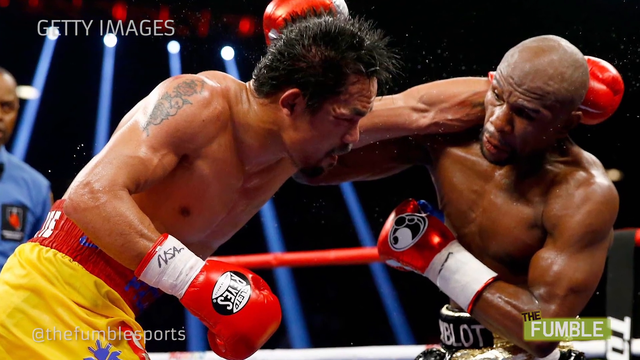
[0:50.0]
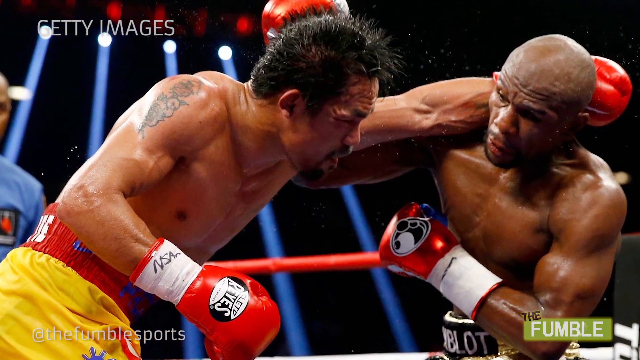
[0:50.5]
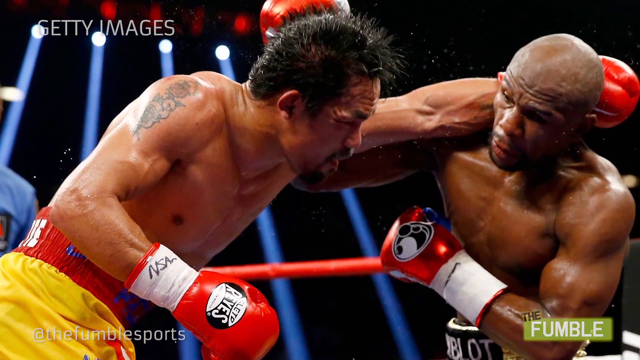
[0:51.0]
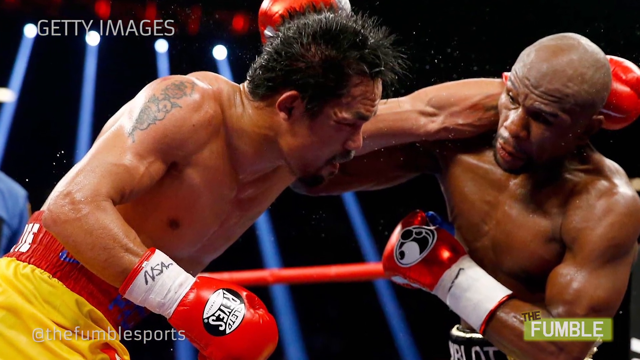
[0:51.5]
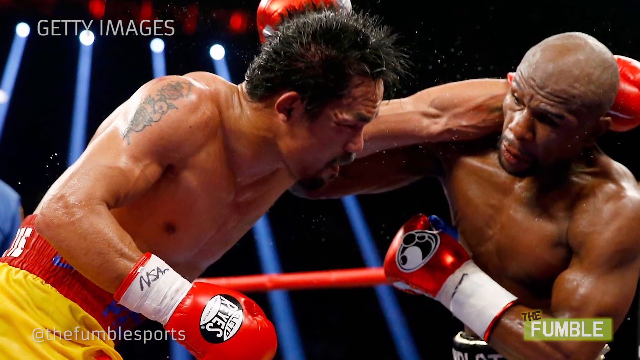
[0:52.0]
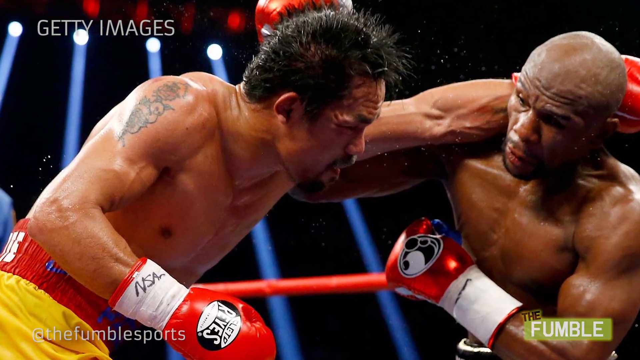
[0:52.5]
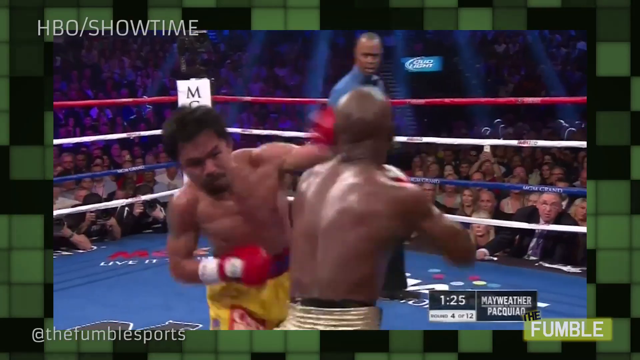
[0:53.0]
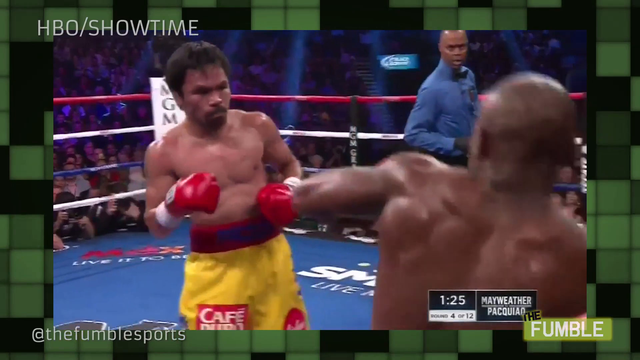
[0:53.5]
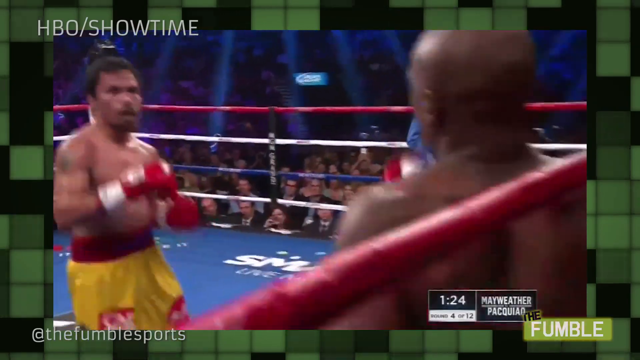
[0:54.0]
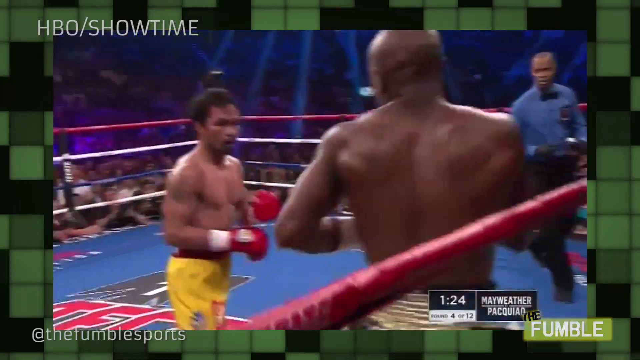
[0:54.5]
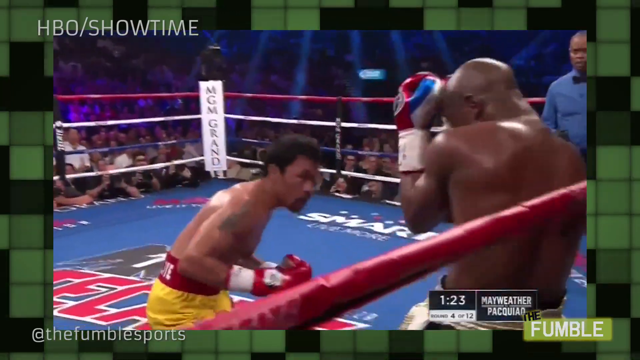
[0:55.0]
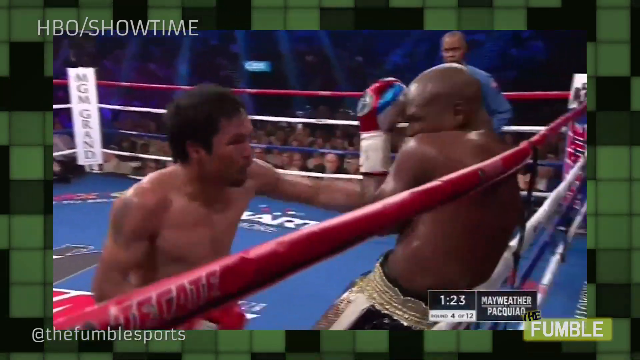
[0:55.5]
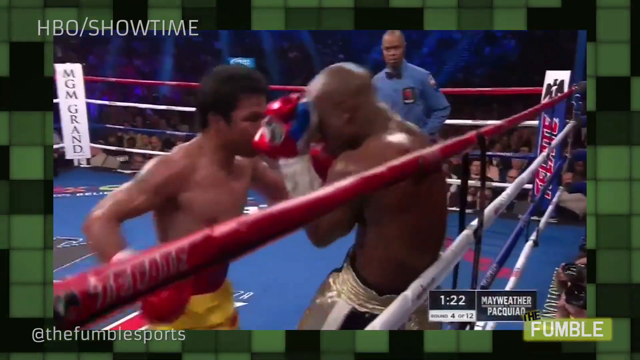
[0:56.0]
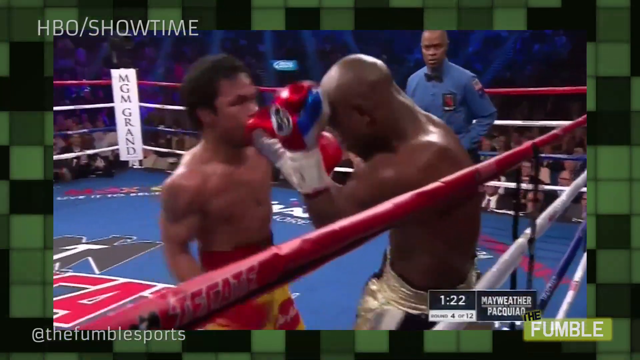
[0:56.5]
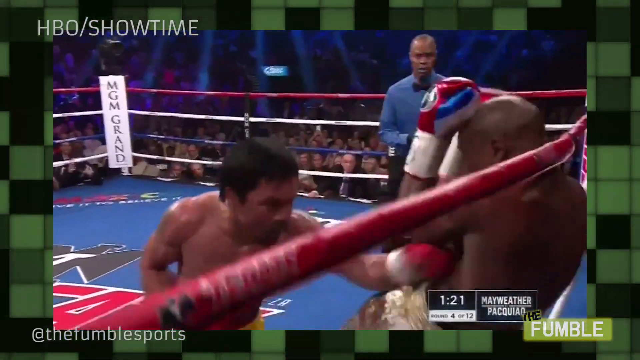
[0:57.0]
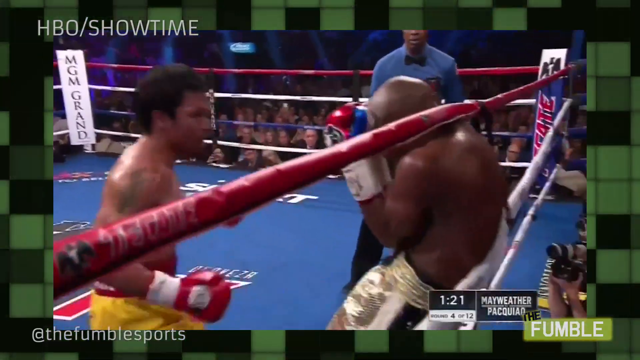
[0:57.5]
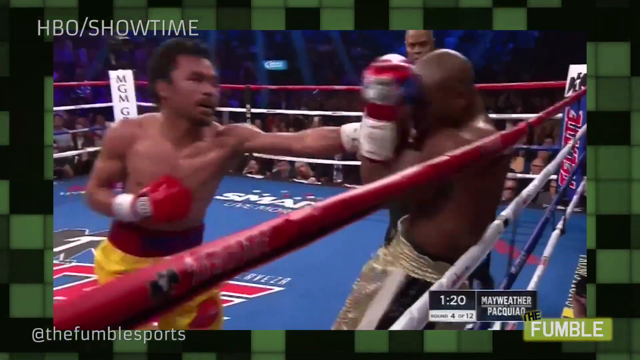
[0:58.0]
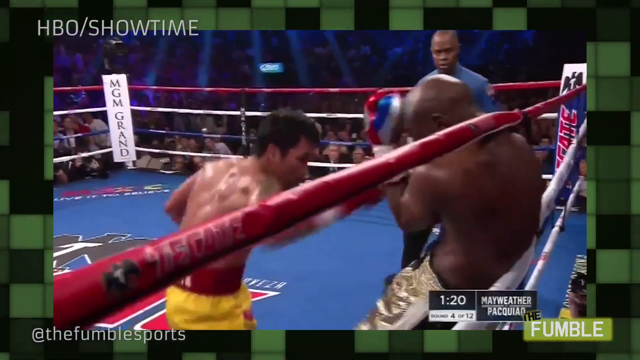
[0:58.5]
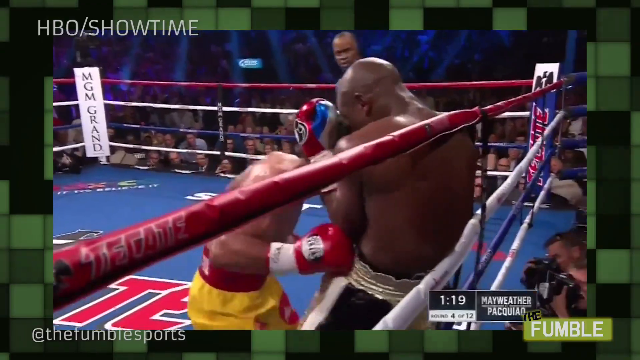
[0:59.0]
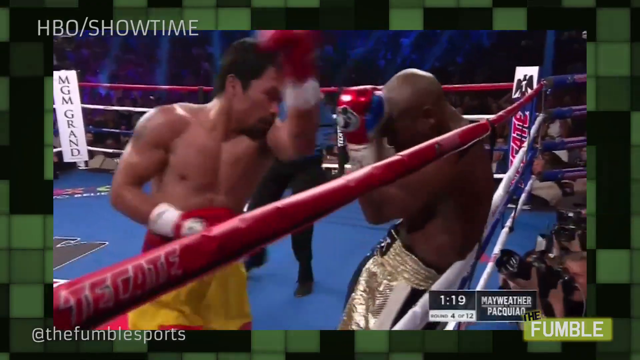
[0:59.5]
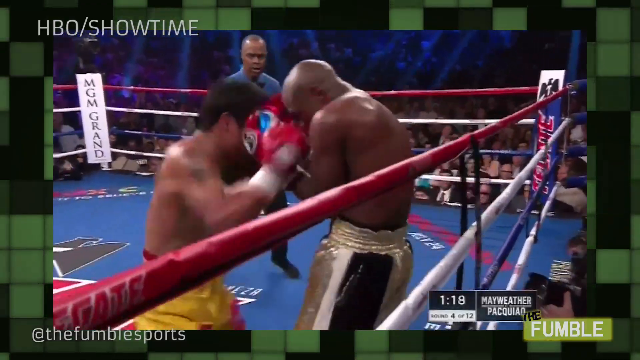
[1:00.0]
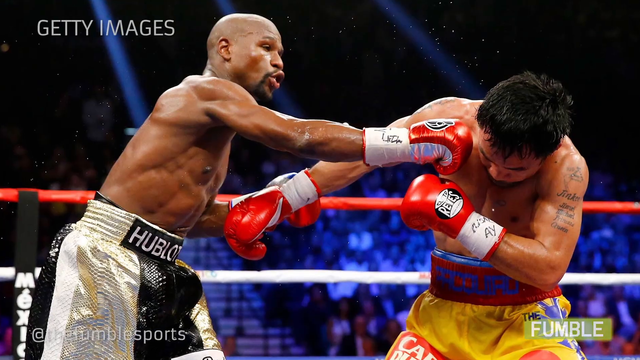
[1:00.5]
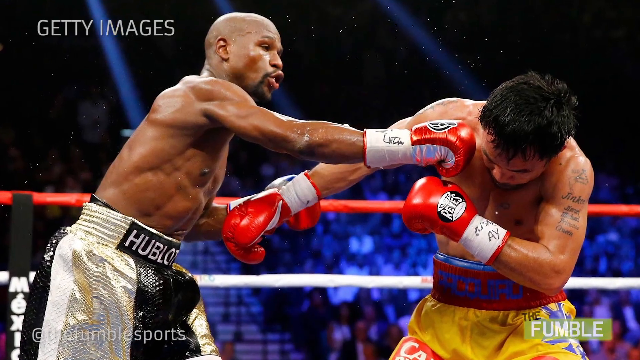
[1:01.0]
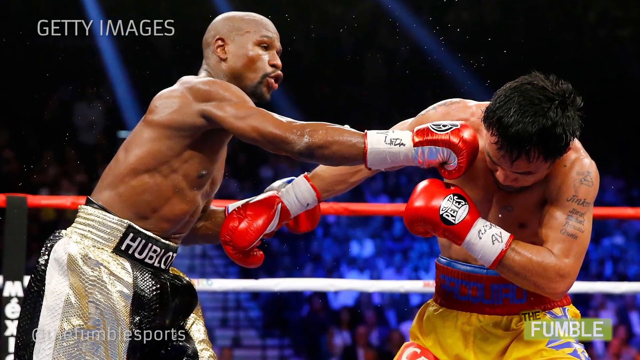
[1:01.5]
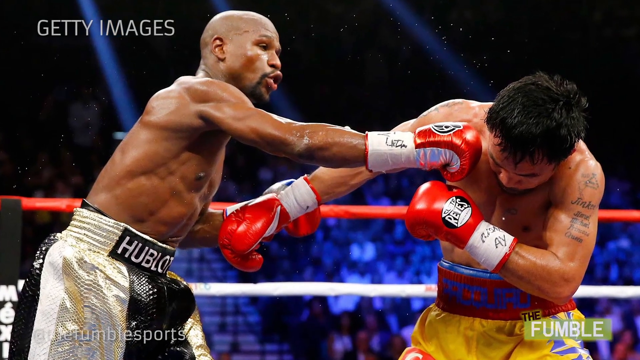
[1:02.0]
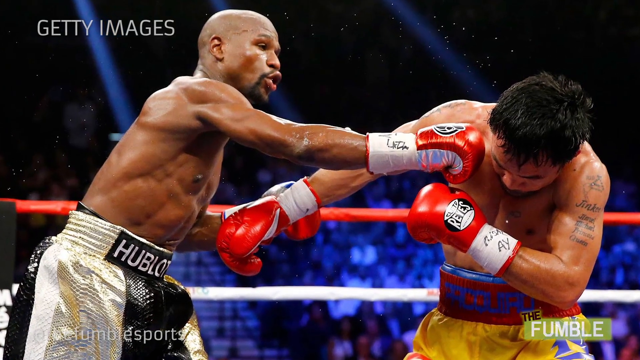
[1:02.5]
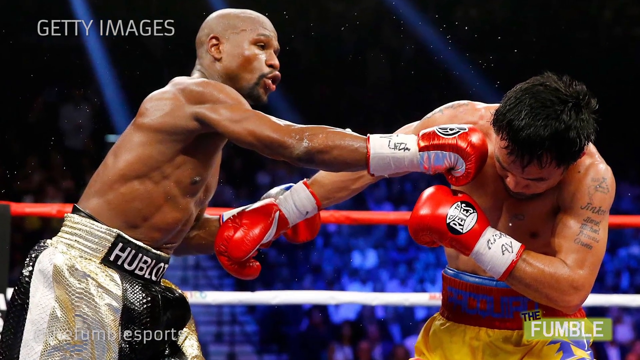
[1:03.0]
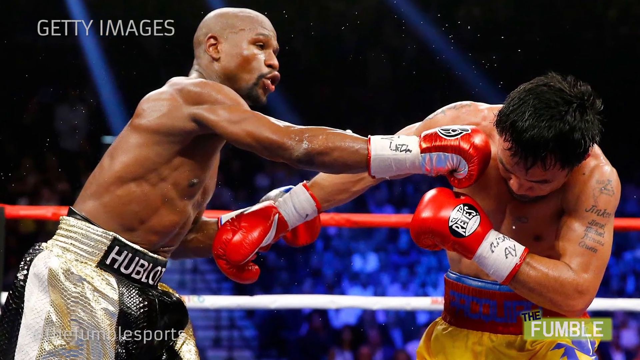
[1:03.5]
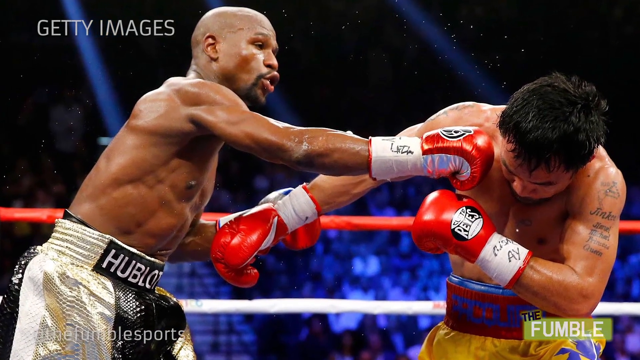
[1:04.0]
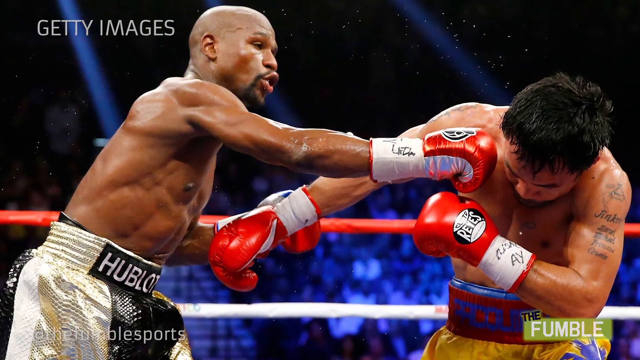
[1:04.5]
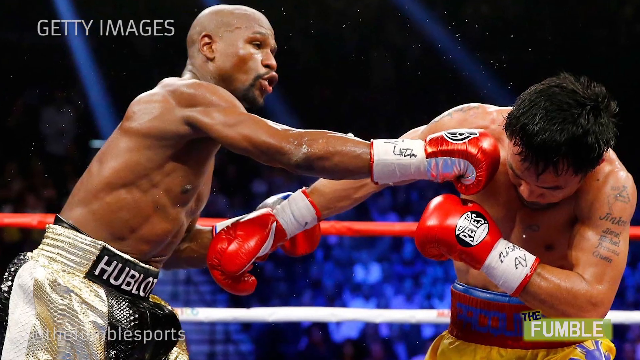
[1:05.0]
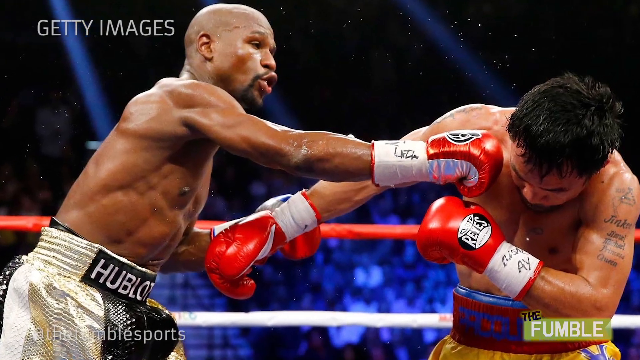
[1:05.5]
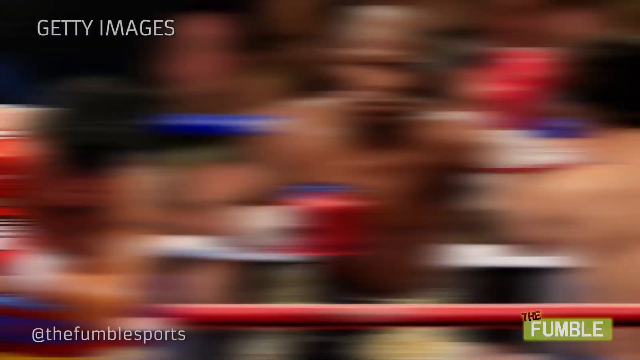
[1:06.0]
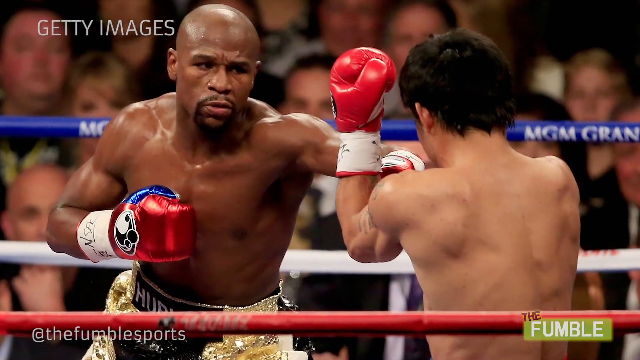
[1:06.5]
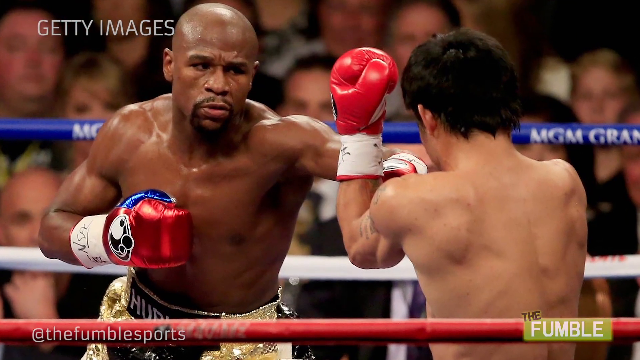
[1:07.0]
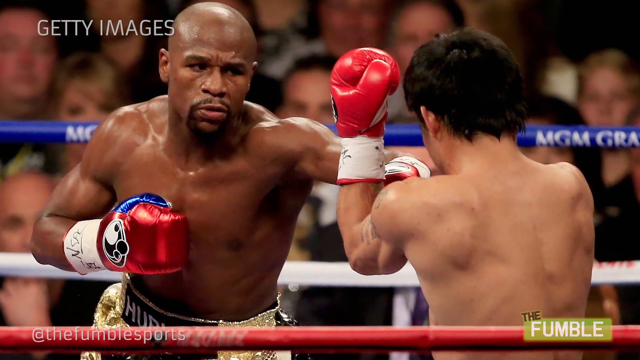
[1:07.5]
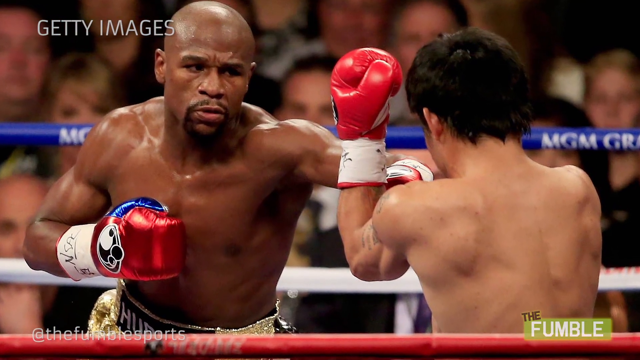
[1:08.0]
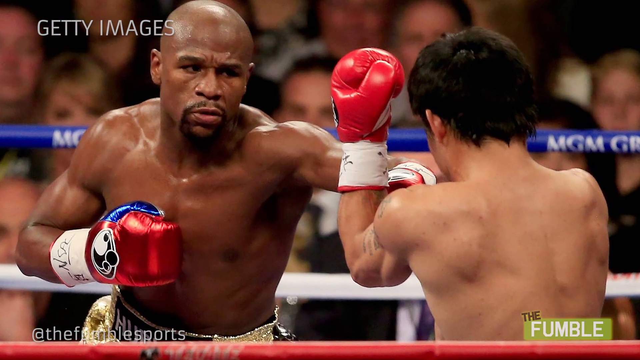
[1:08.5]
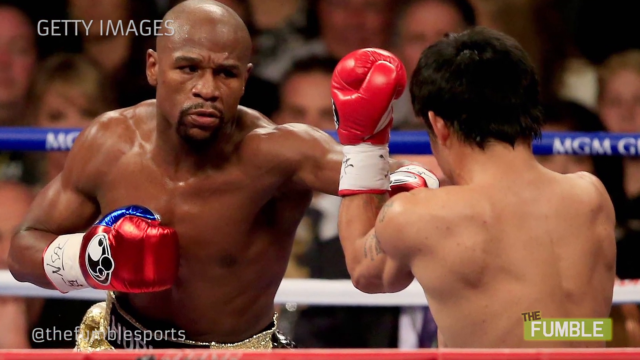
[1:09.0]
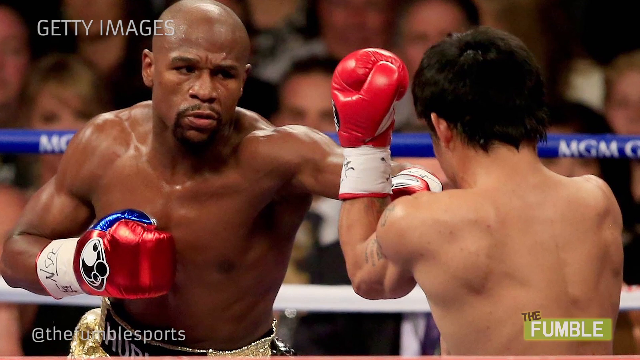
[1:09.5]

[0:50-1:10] A still photograph shows Mayweather and Pacquiao mid-fight, both covered in sweat, with Pacquiao punching or holding his arm above Mayweather's head. The video moves to live footage of the match inside the ring, with a large crowd of people behind the boxers and a ref in the ring with them. The scoreboard shows they are on round 4 of 12. Pacquiao is dominating, with Mayweather in the corner up against the ropes. Another still photograph shows them mid-match, with Mayweather hitting Pacquiao on the left side of his face. A different photograph from the match shows Mayweather reaching forward to punch toward Pacquiao; only the back of Pacquiao and the front of Mayweather's face are visible.